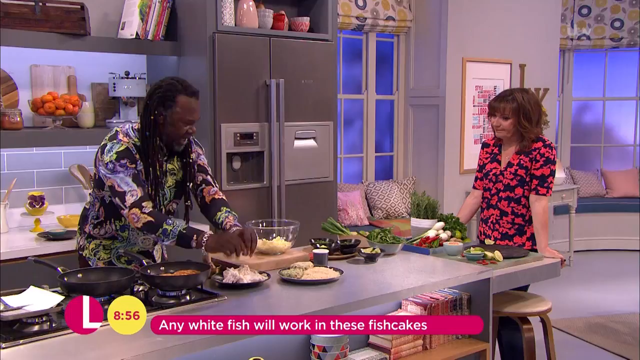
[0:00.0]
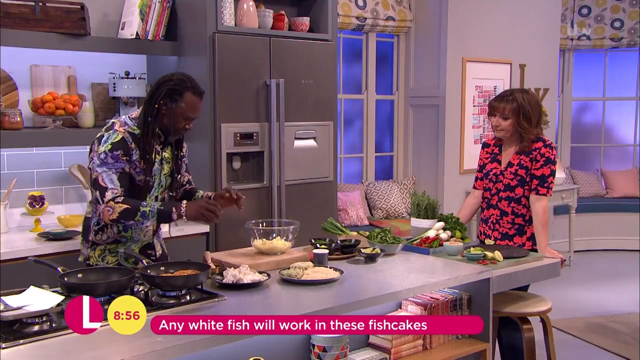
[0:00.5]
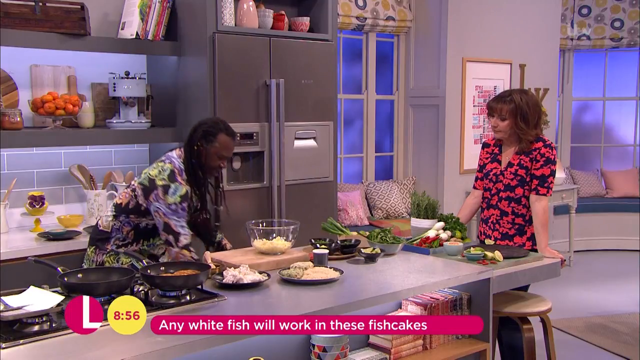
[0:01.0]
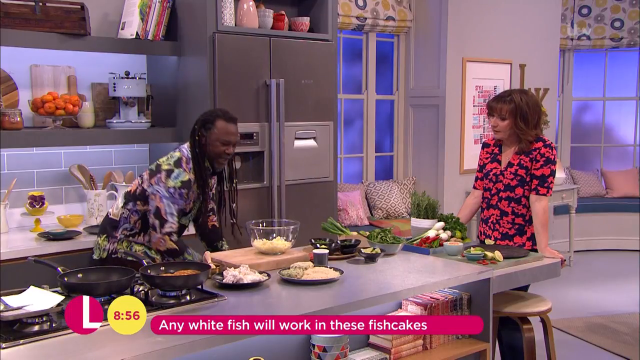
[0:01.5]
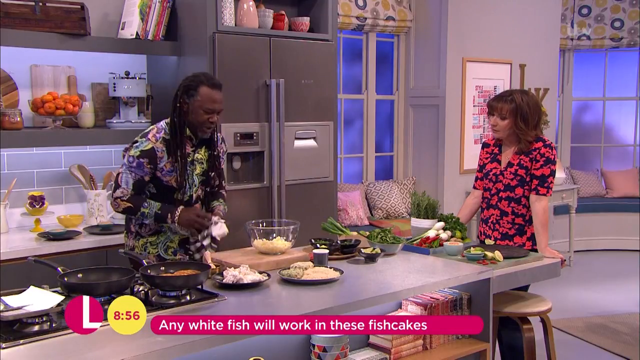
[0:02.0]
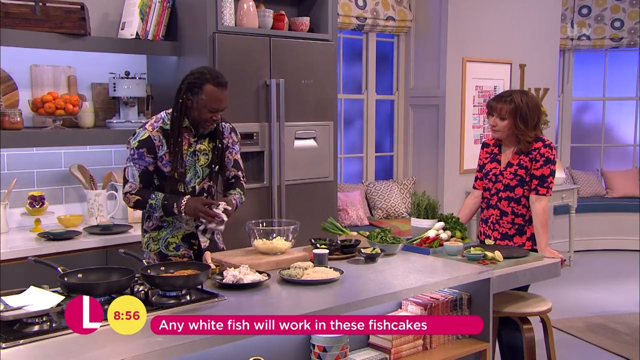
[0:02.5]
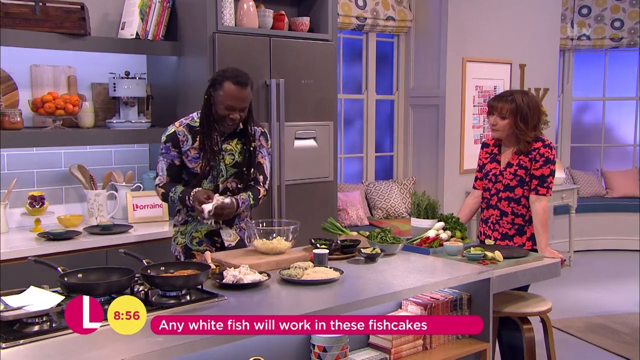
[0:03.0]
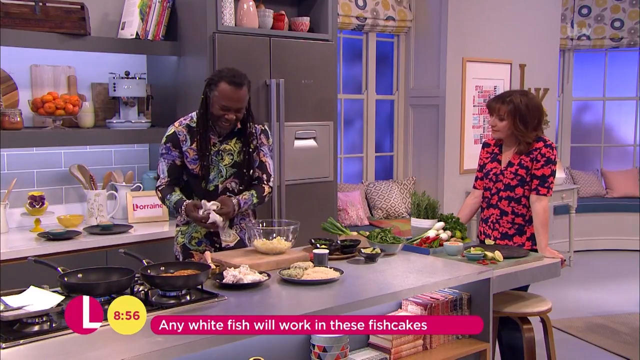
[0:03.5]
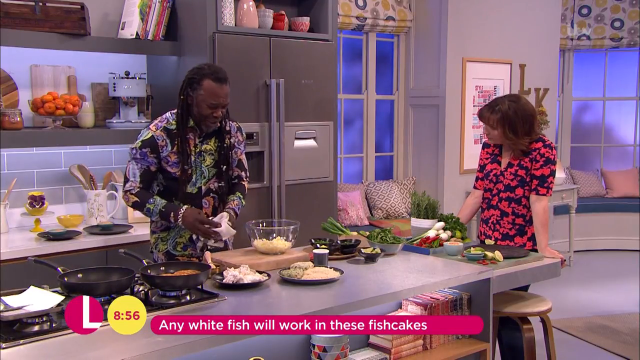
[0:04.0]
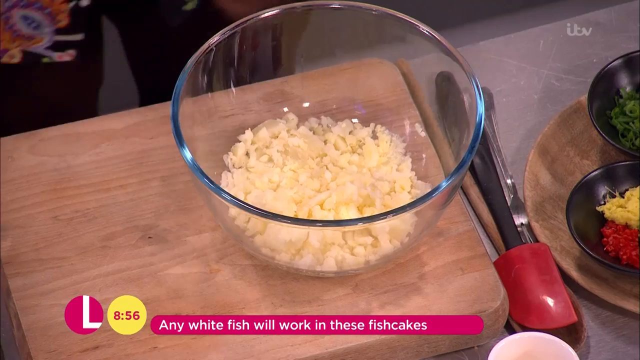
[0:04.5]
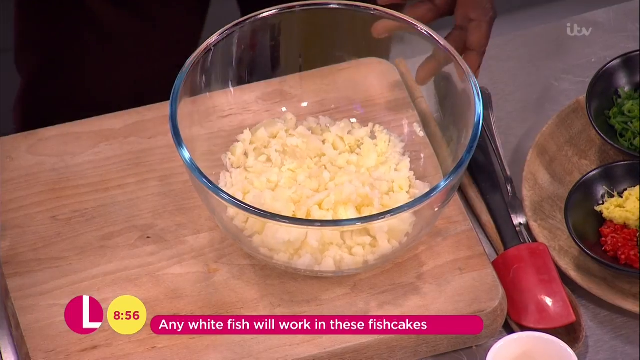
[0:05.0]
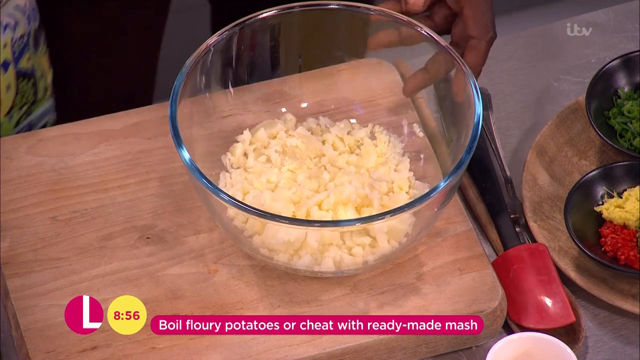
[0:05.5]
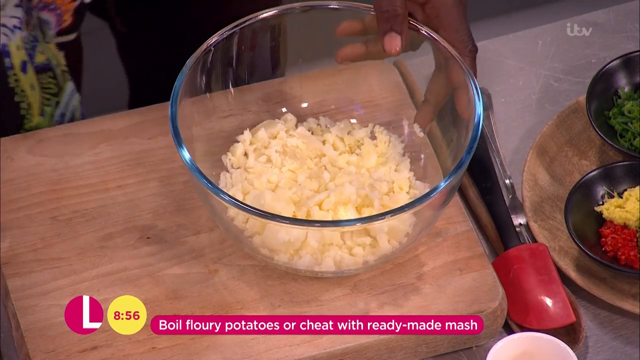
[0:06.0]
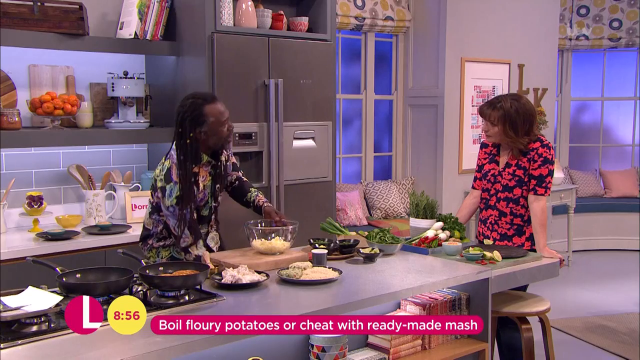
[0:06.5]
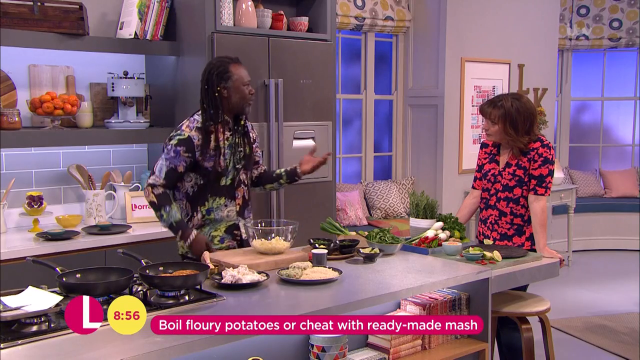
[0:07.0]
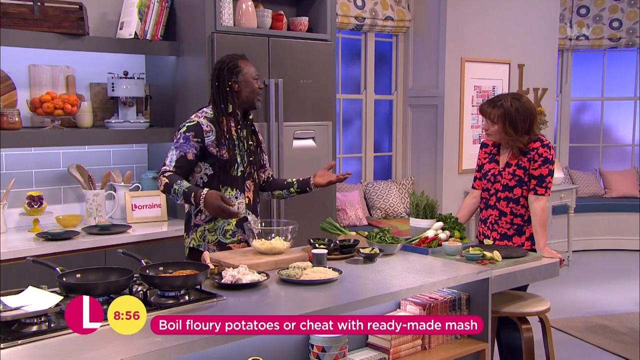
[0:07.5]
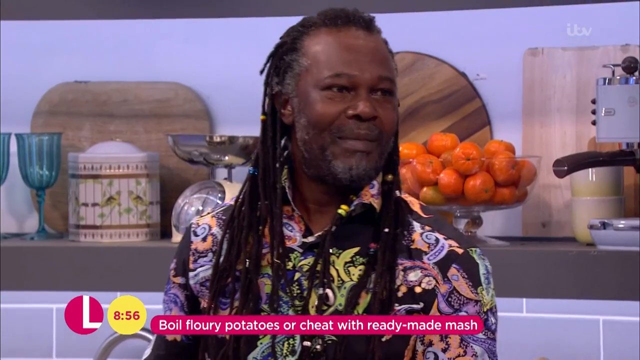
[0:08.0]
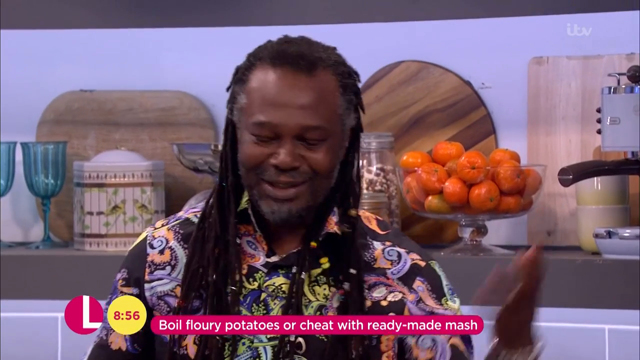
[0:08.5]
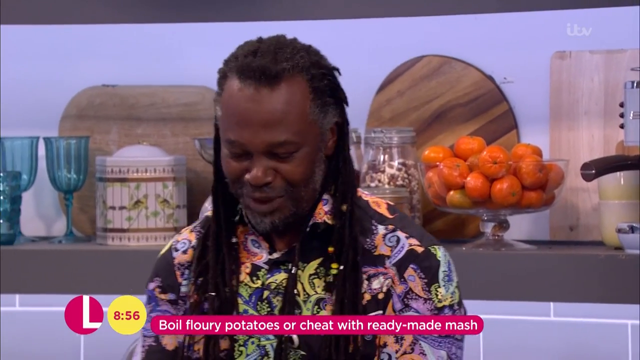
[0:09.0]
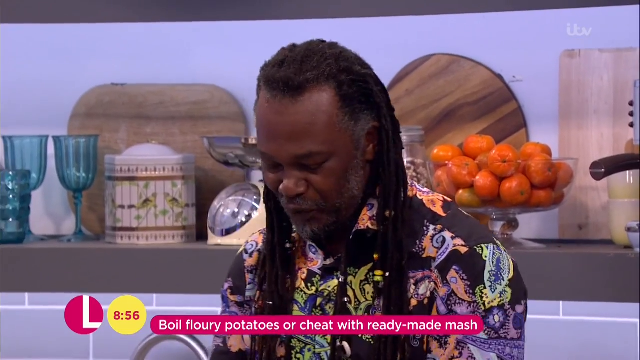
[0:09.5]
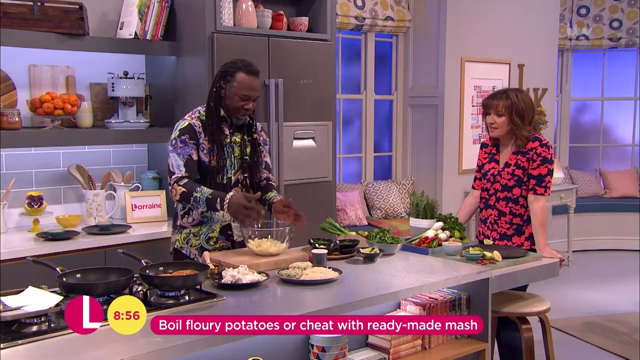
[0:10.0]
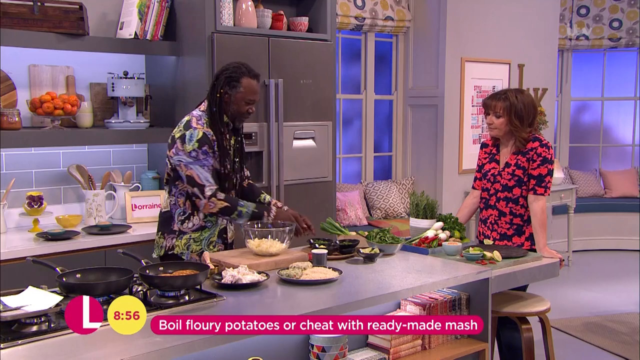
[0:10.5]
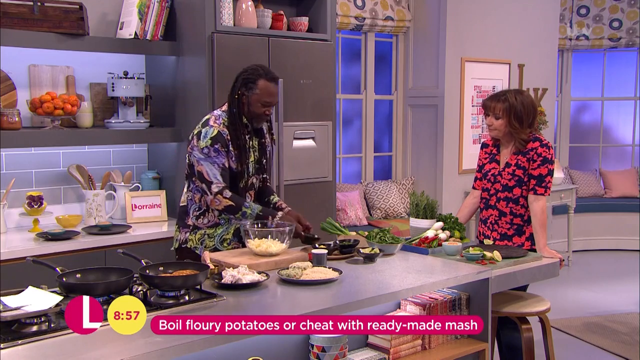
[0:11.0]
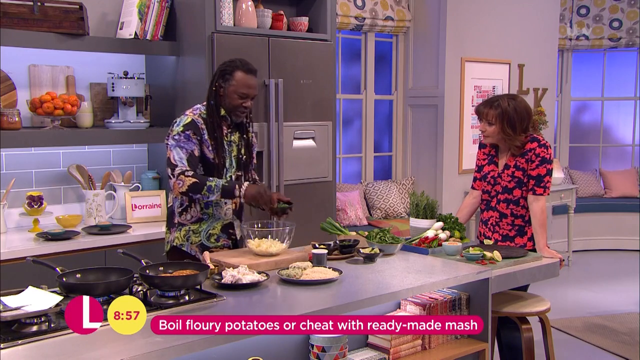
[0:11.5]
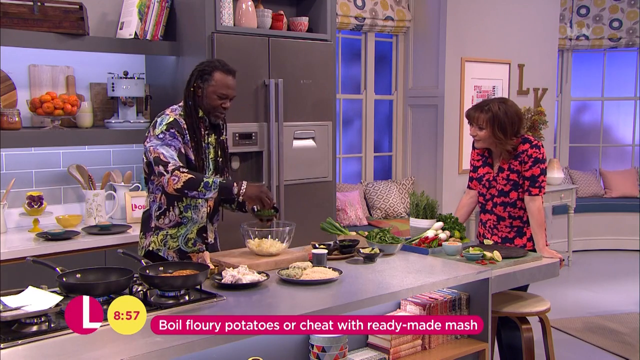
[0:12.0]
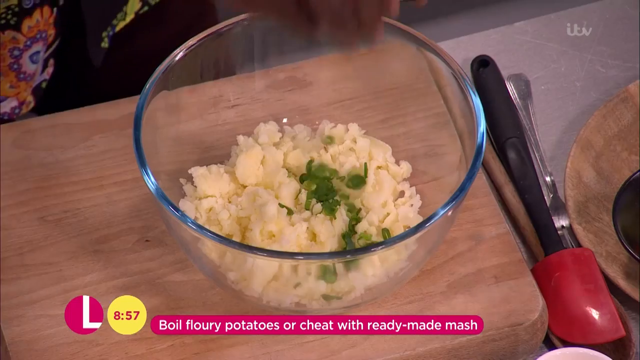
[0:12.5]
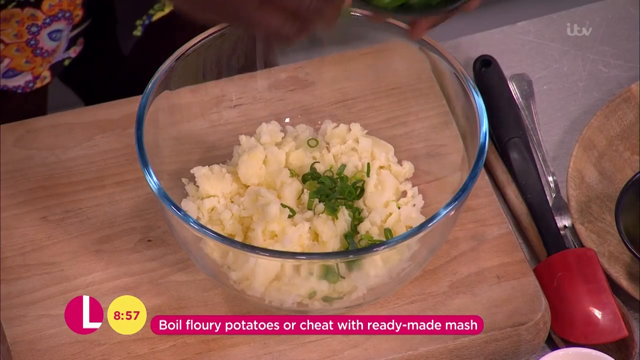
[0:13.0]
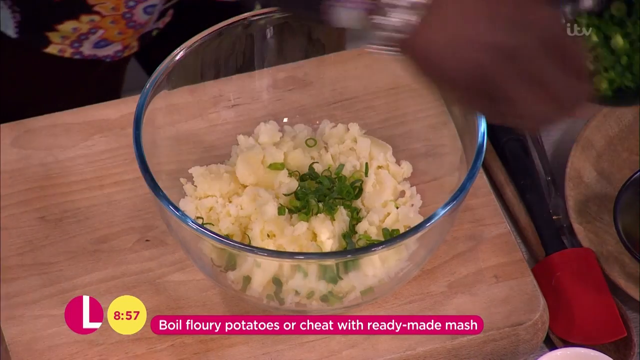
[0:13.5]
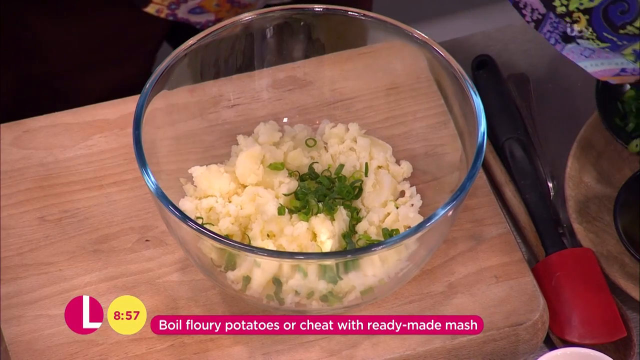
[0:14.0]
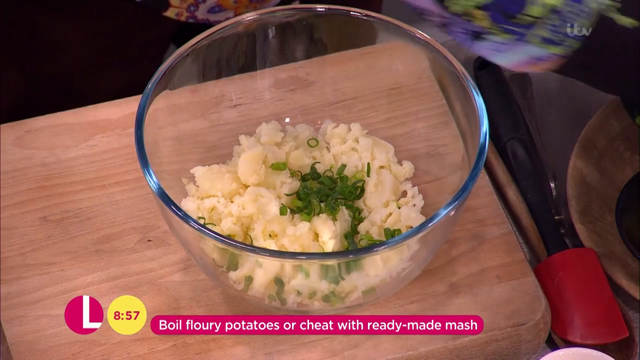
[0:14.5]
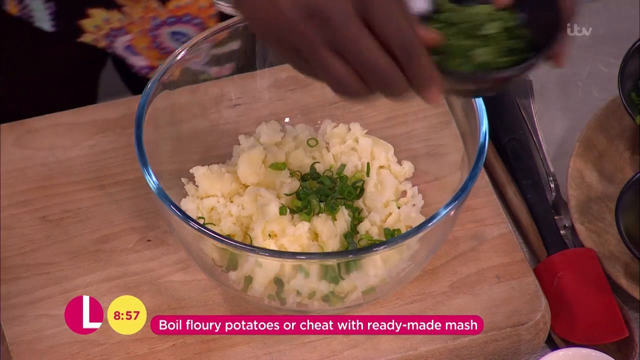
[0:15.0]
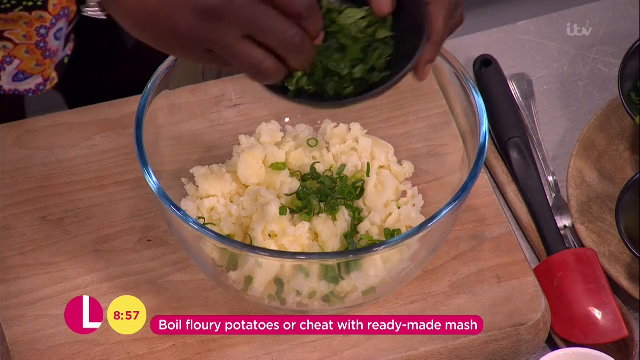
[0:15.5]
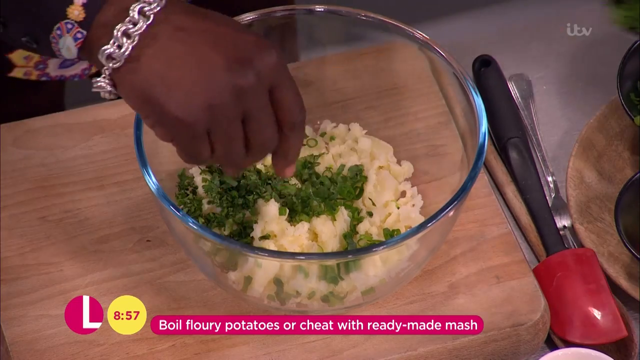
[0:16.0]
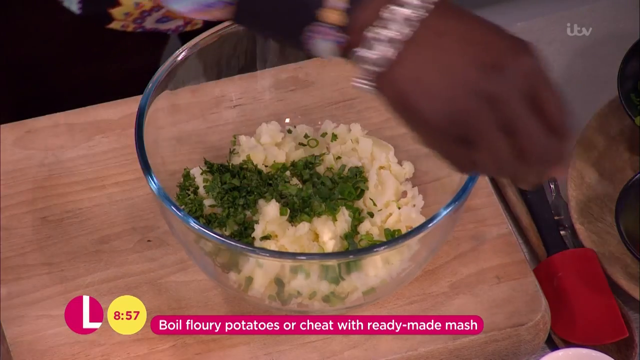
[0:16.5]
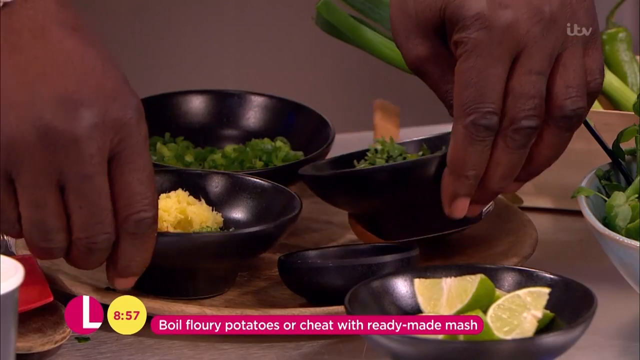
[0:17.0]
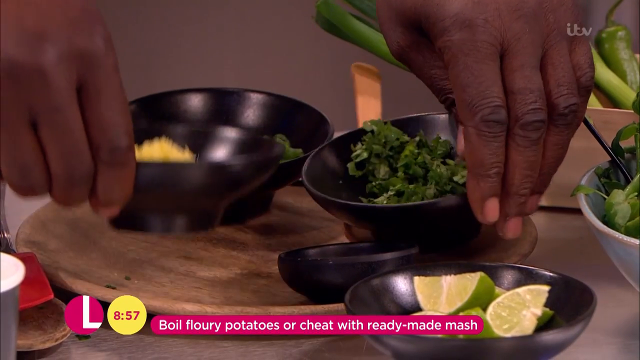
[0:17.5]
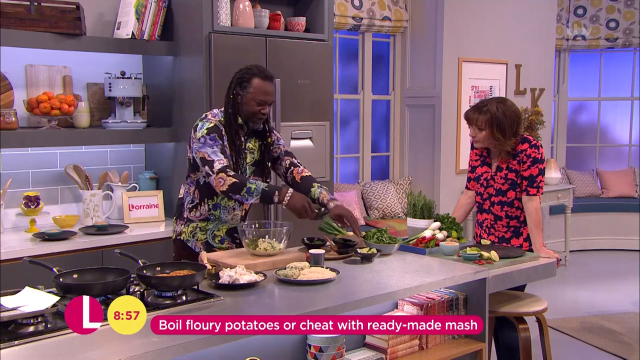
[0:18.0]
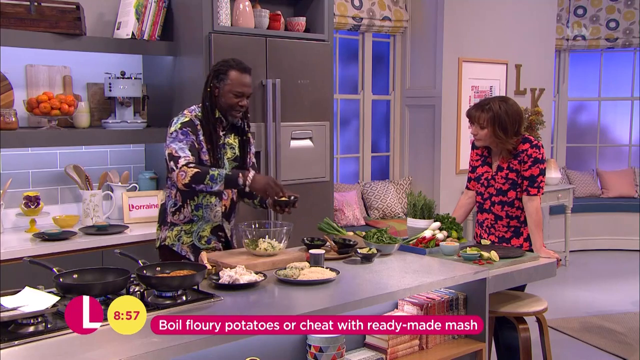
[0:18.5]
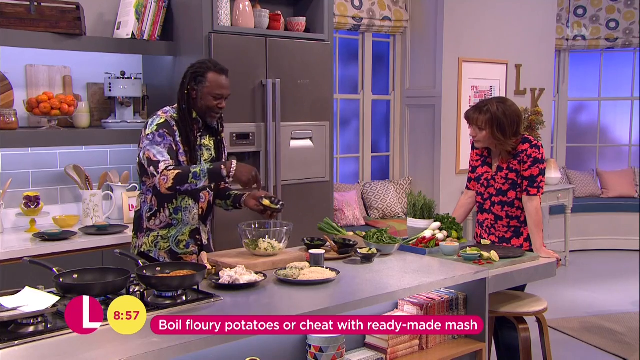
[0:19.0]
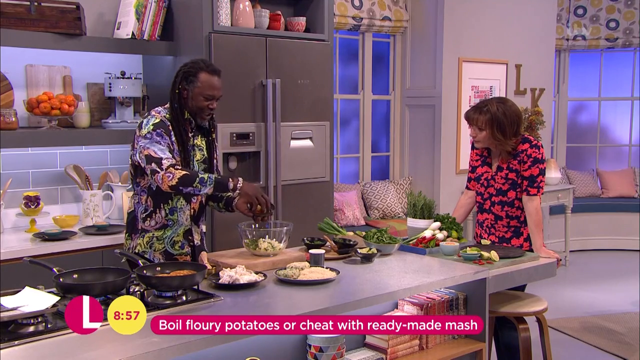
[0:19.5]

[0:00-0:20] Two hosts are cooking in a kitchen on a television show, in a studio setting. One host is a white woman of about 60 with brown hair that comes just off her shoulders, wearing a black and red short-sleeved shirt. She stands at the side of the counter table with both hands placed on it, and in front of her is a pile of different vegetables such as onions and herbs. On the kitchen side of the countertop is a black man of about 65 with black hair, wearing a long-sleeved colorful shirt. He starts by cooking and shredding some fish onto a plate, then wipes his hands.